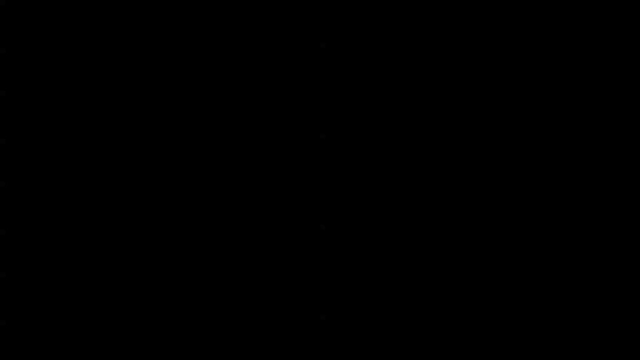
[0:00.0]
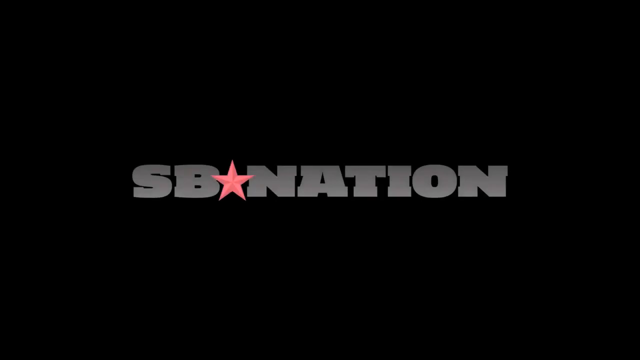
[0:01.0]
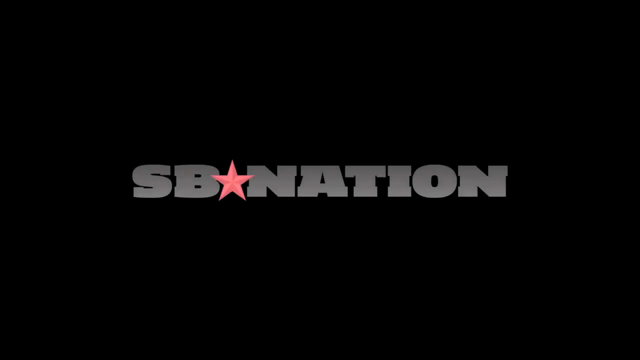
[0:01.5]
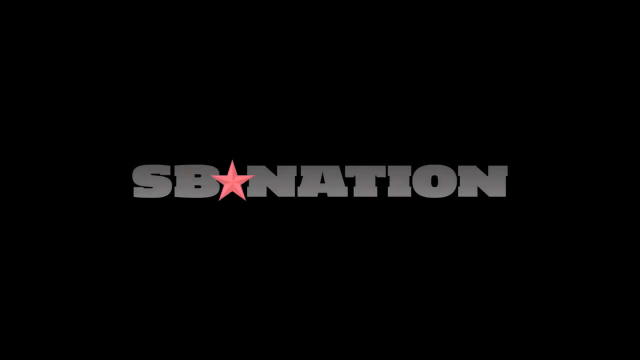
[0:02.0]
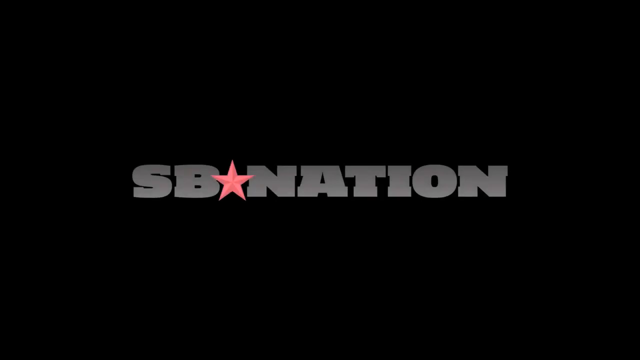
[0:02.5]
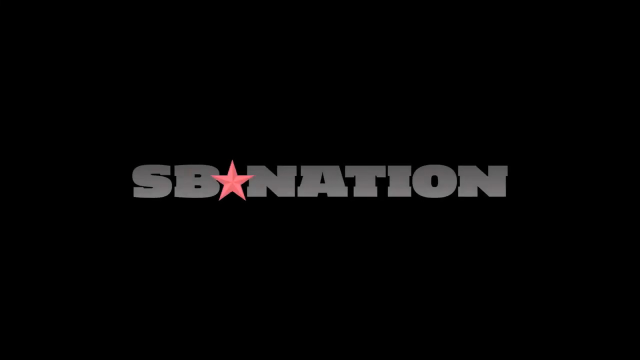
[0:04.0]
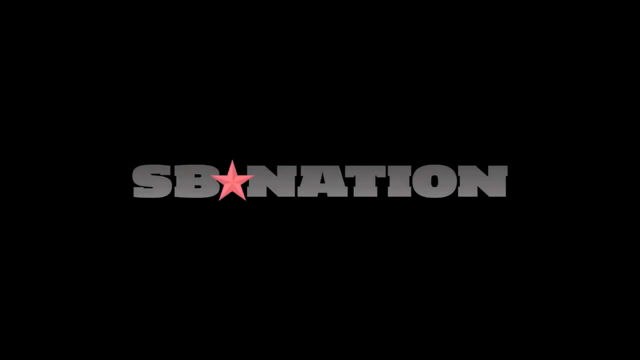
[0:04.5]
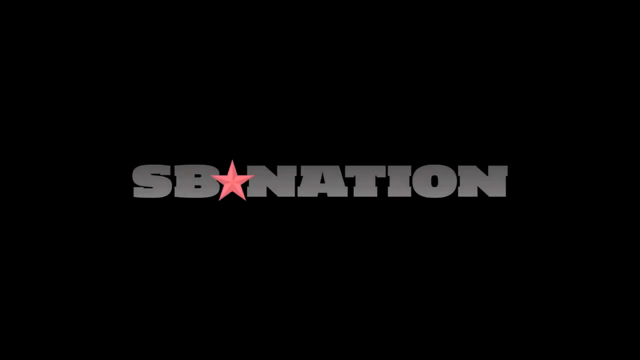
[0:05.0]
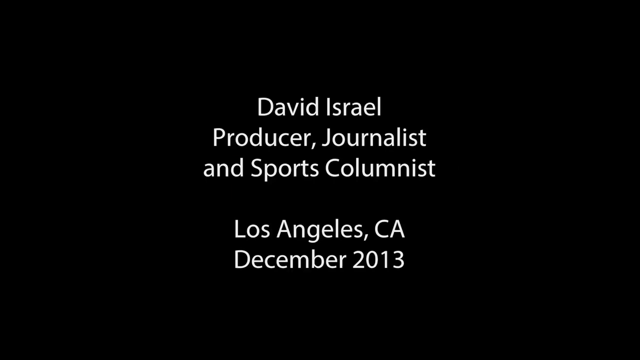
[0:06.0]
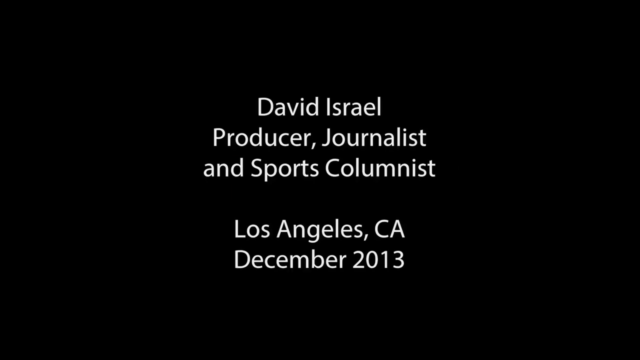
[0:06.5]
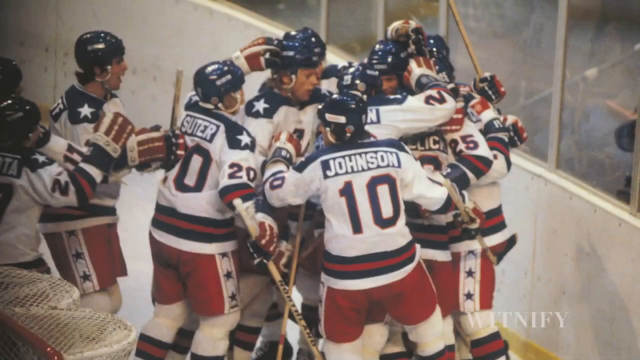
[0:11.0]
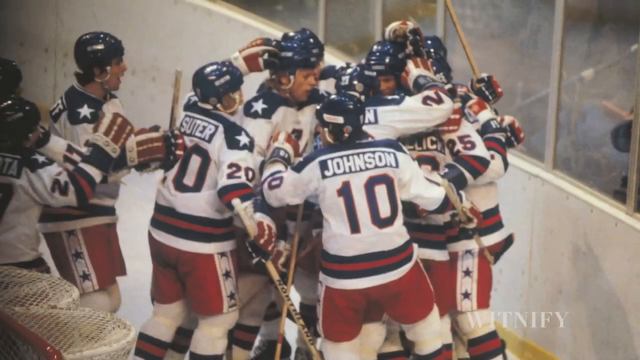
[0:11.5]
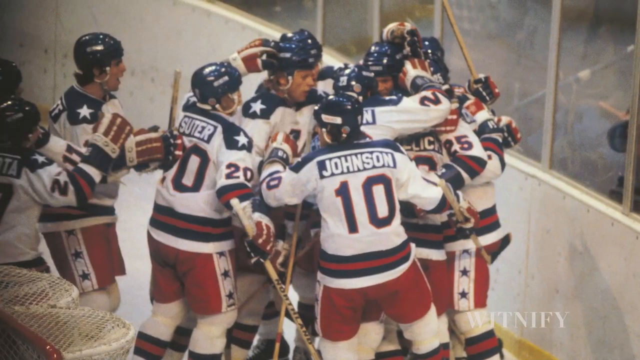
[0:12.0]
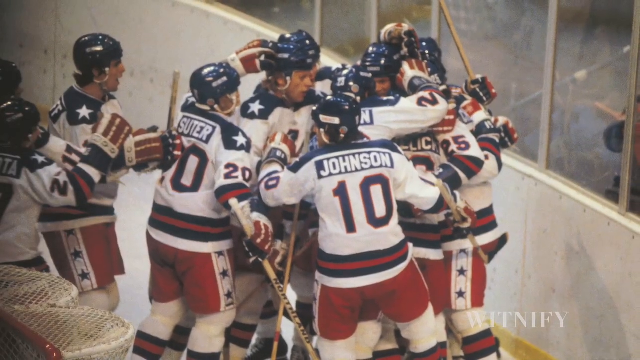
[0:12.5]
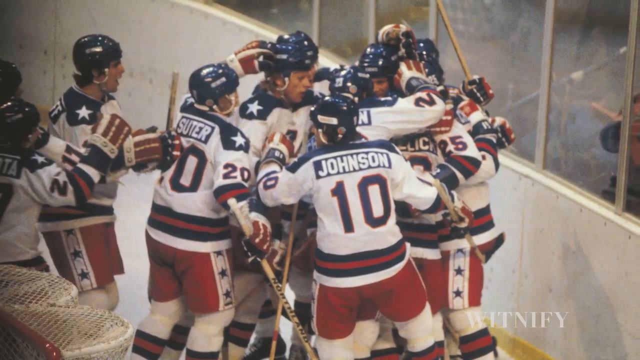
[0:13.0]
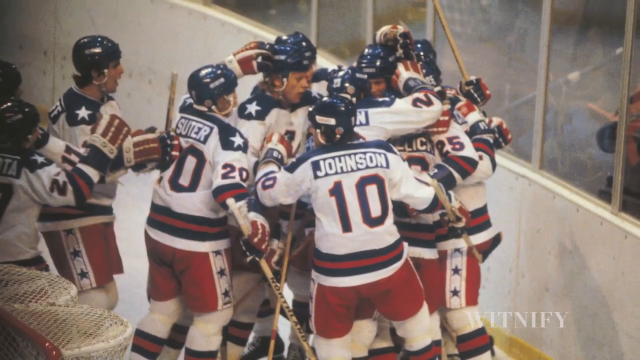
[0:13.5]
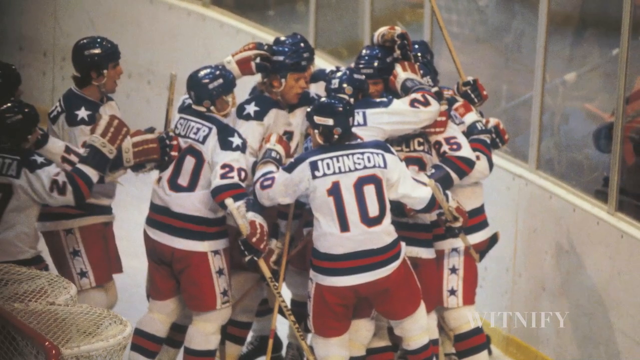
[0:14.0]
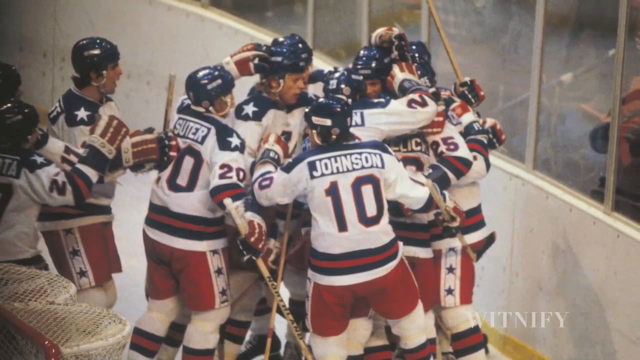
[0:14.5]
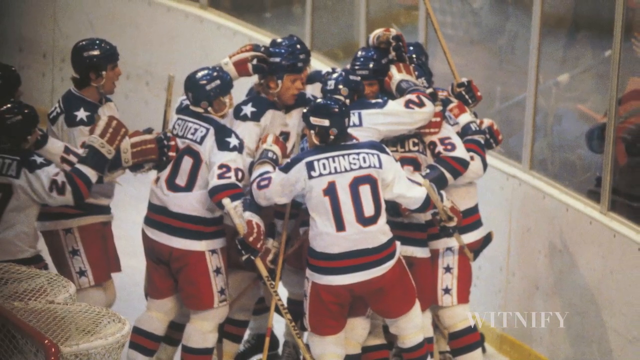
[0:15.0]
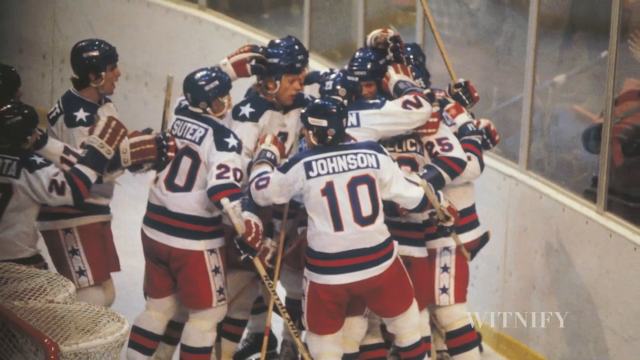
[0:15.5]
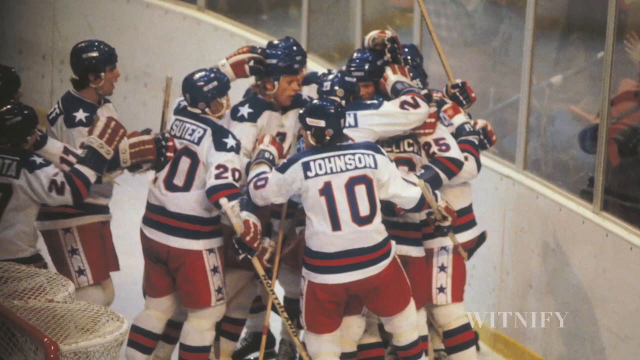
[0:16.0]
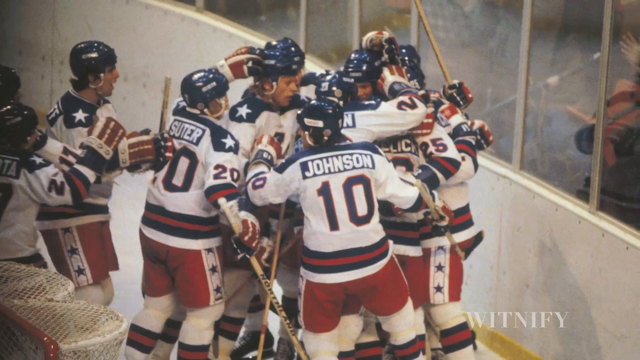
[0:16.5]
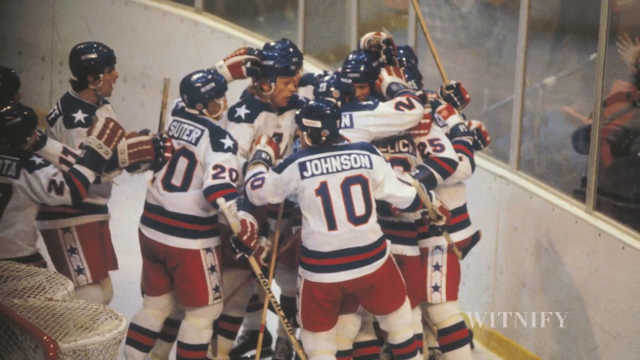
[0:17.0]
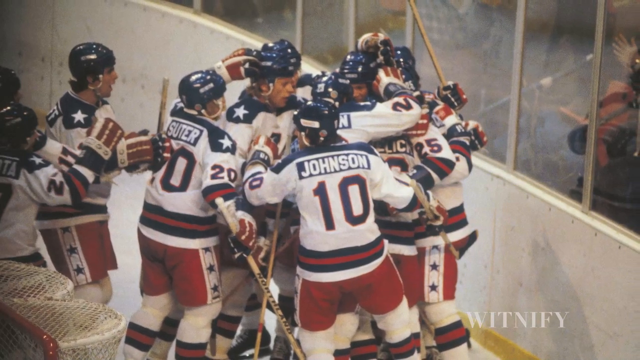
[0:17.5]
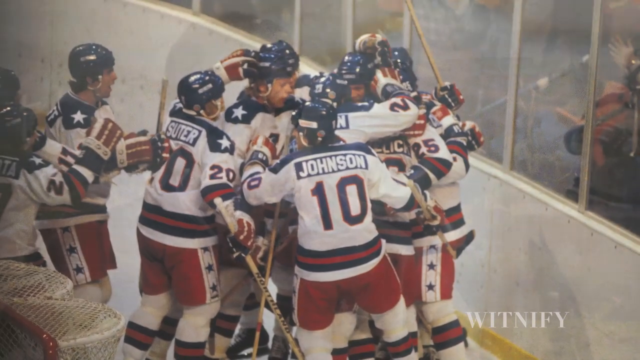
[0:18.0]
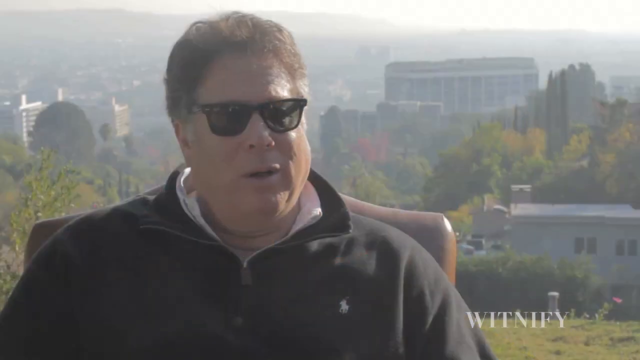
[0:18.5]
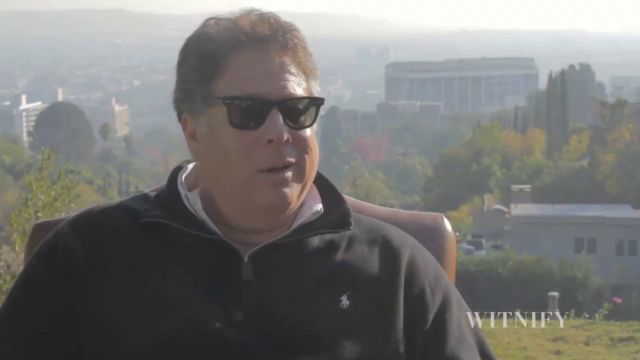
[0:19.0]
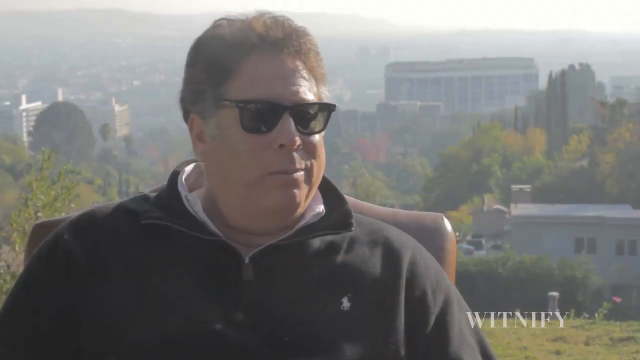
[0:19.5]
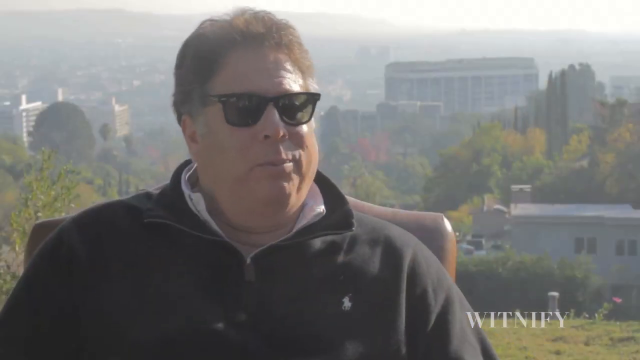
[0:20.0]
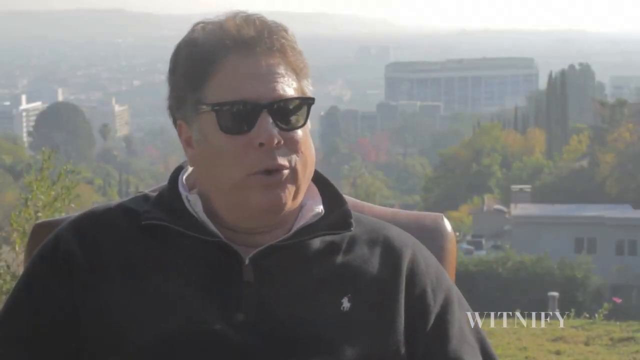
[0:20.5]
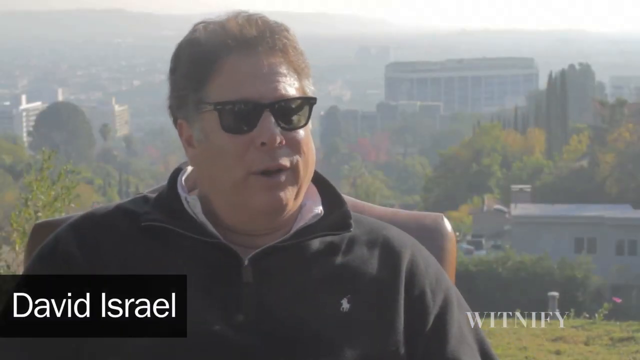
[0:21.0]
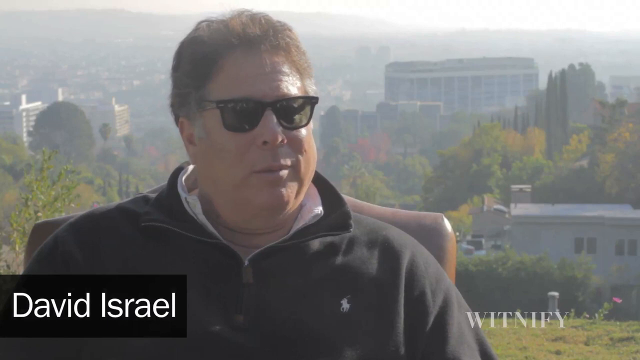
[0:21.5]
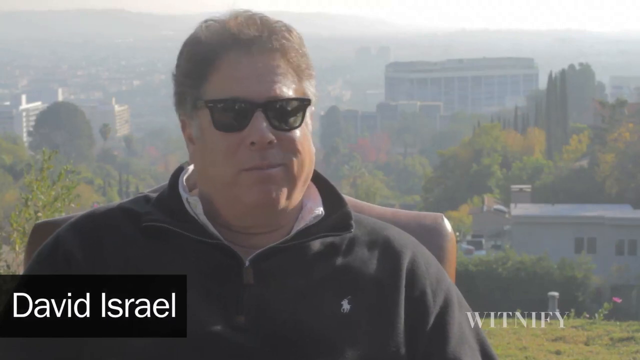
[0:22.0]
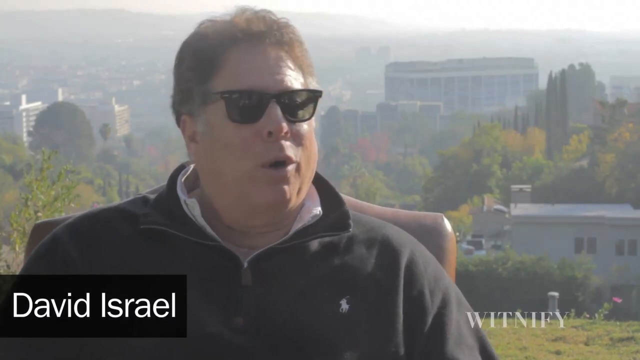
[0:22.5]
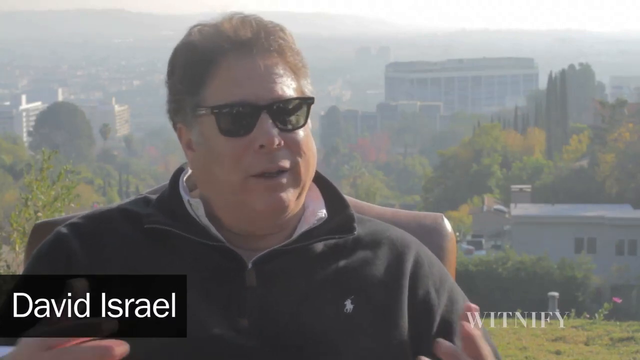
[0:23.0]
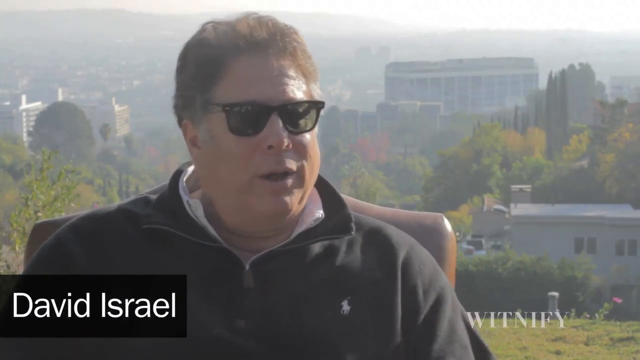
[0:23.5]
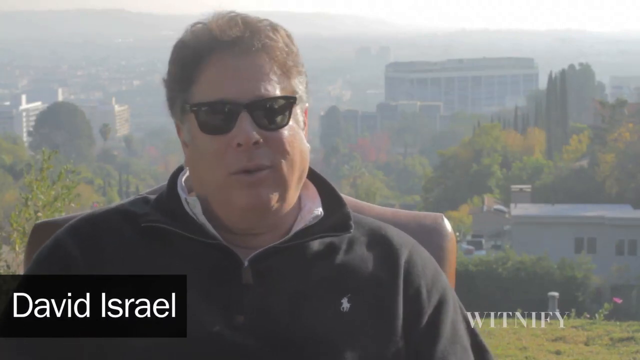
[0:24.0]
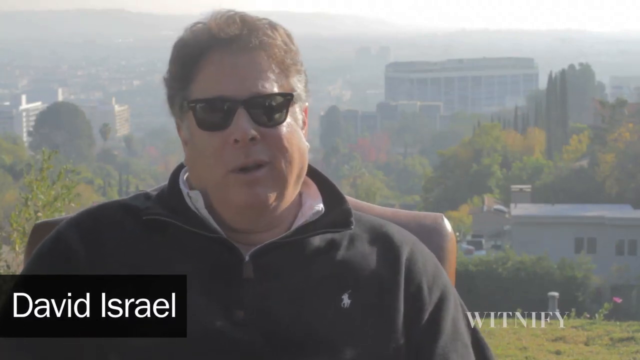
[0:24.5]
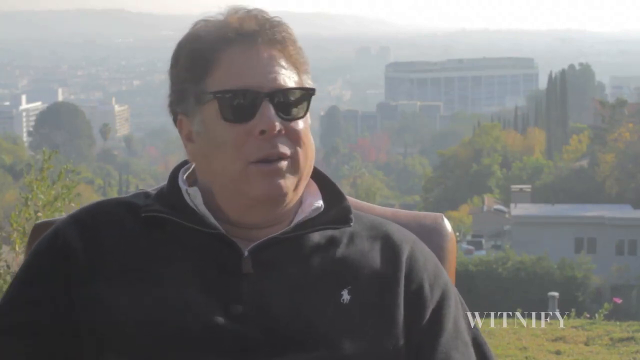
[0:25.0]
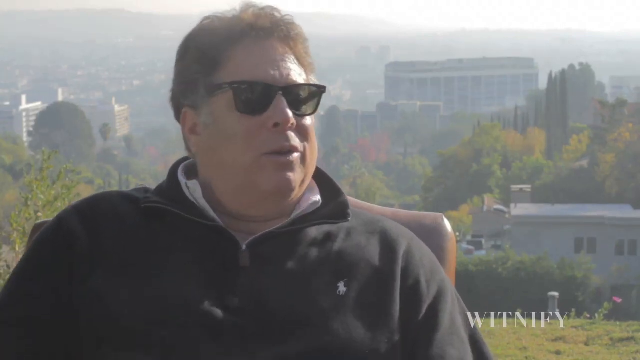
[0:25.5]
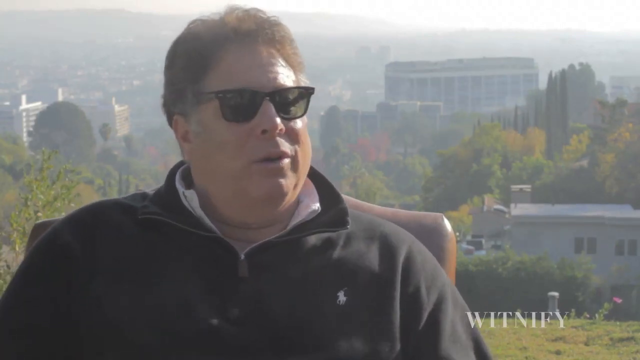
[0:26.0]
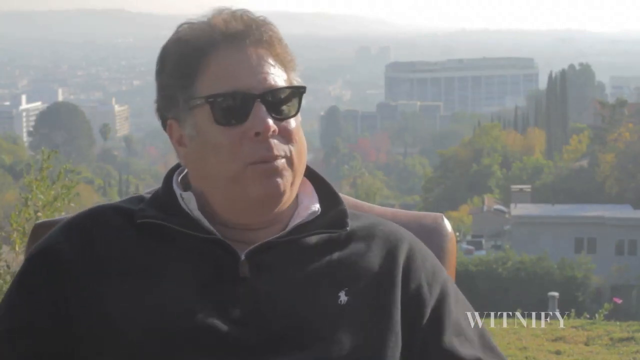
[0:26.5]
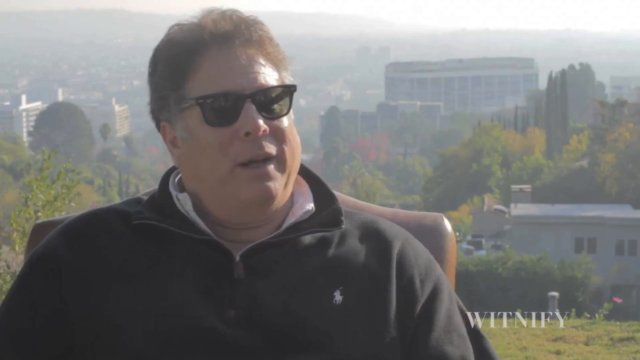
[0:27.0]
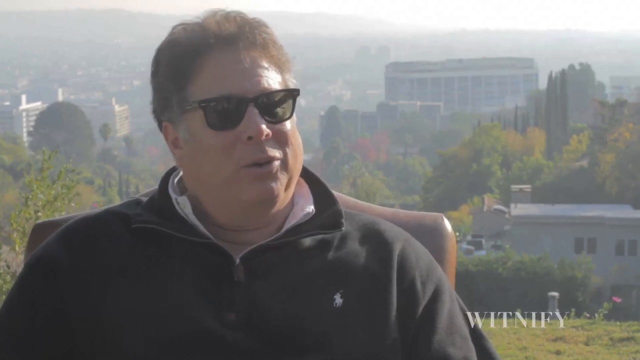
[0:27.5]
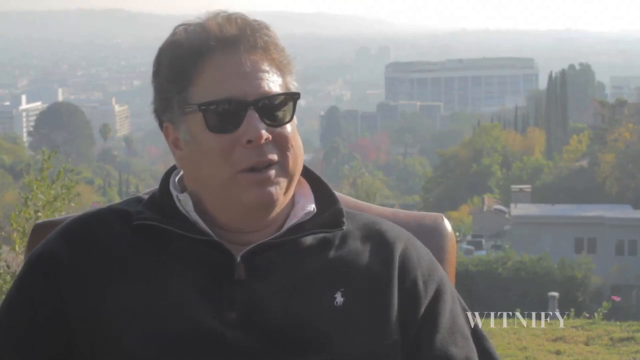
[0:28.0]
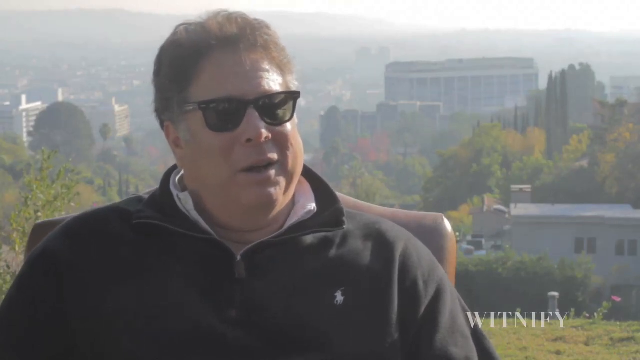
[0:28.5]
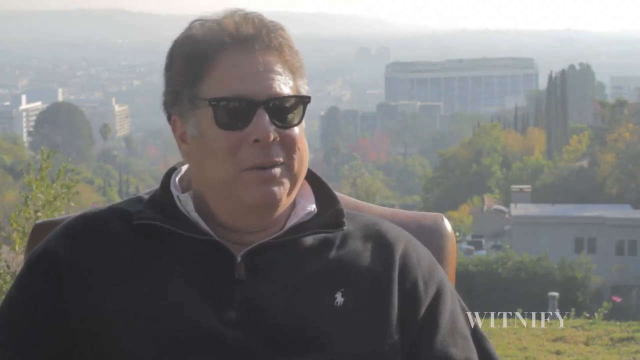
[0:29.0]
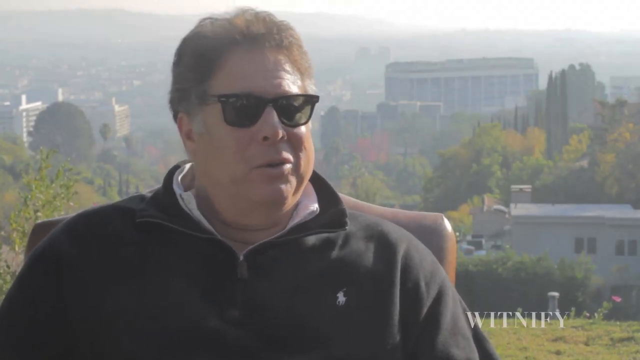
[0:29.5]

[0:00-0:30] The video begins with an SB Nation logo that has a red star between the S, B, and Nation. The name David Israel comes across the screen, identifying him as a producer, journalist and sports columnist. A still photo shows the USA hockey team celebrating on the ice in full uniform: they wear white uniforms with red hockey pants, and about eight of them are hugging in celebration. Next, a man in sunglasses and a black fleece sweater, David Israel, is seated outdoors speaking into the camera. Behind him is a cityscape, and the background is fairly foggy. He continues to speak into the camera and makes various gestures.